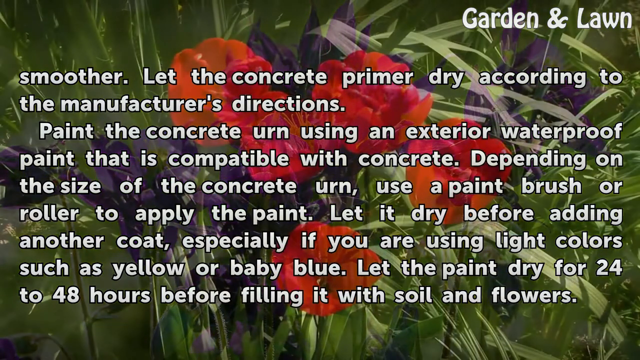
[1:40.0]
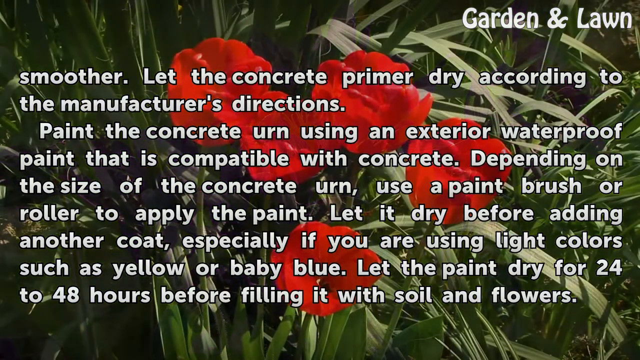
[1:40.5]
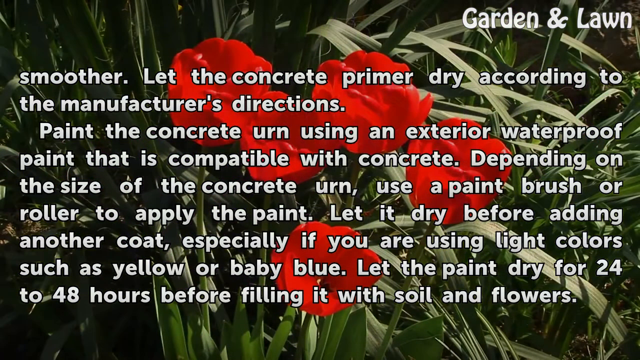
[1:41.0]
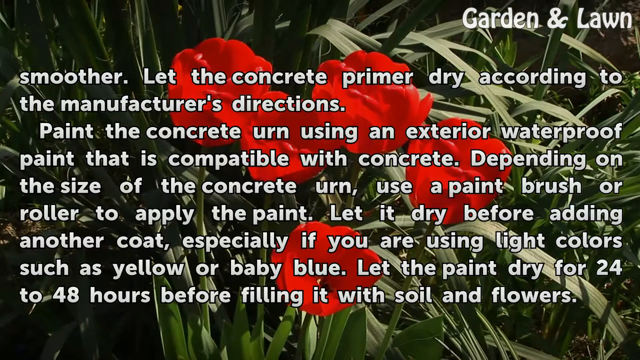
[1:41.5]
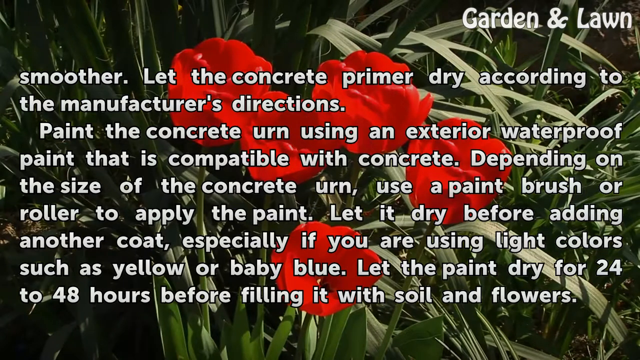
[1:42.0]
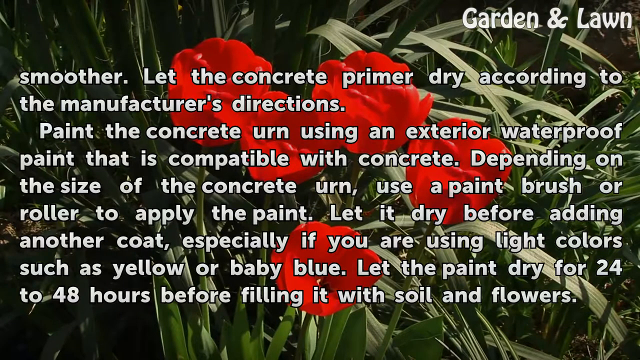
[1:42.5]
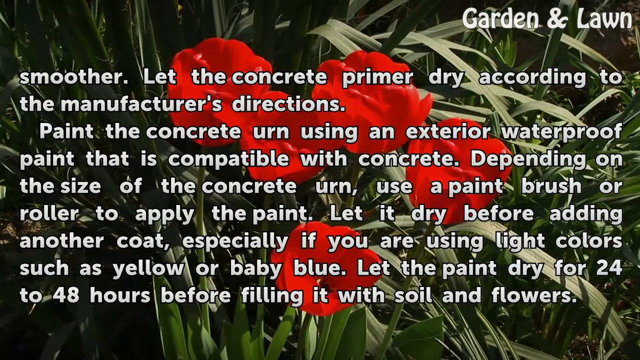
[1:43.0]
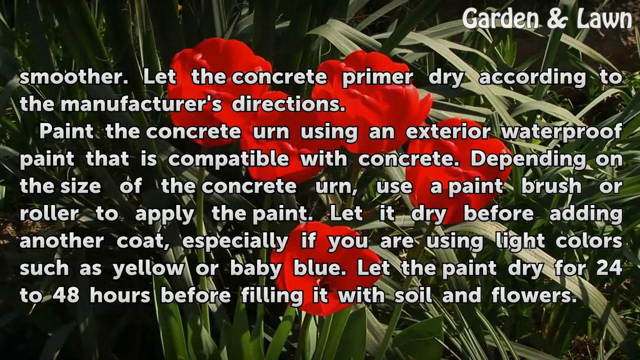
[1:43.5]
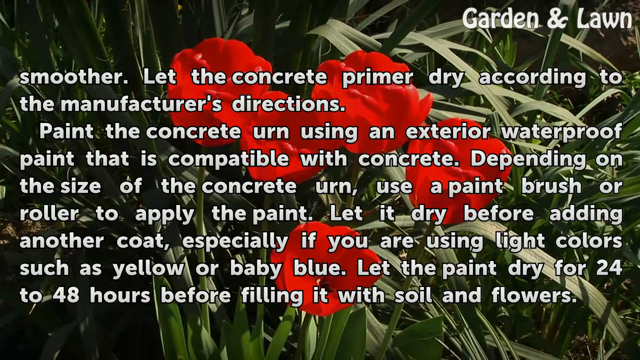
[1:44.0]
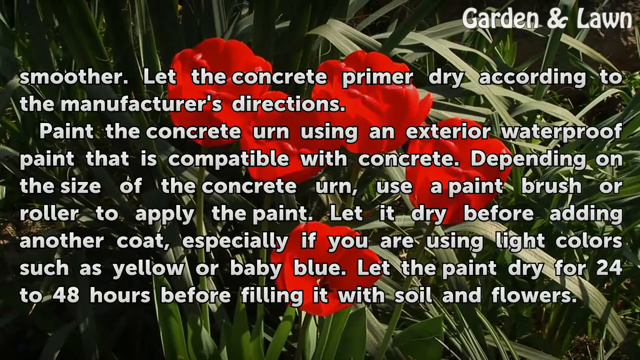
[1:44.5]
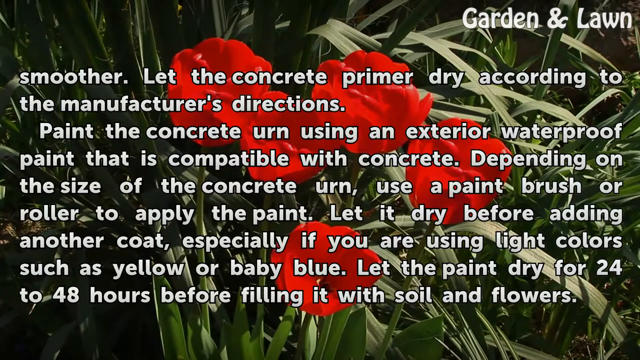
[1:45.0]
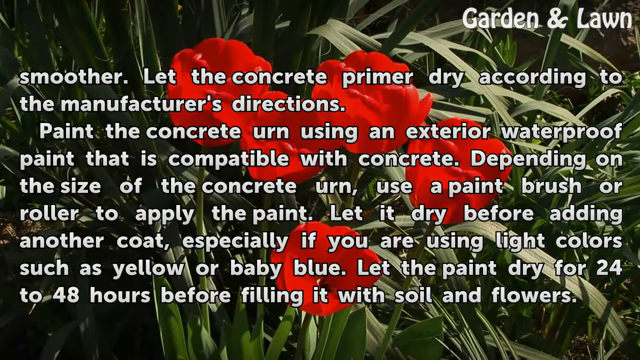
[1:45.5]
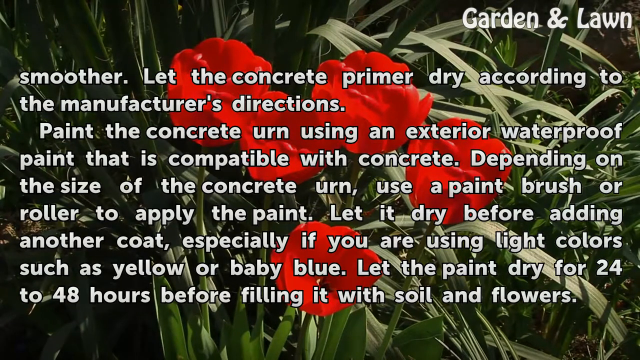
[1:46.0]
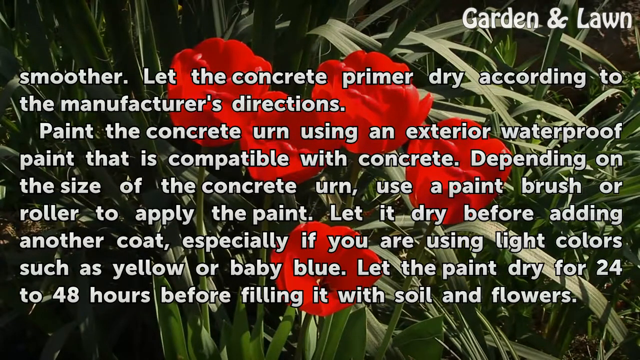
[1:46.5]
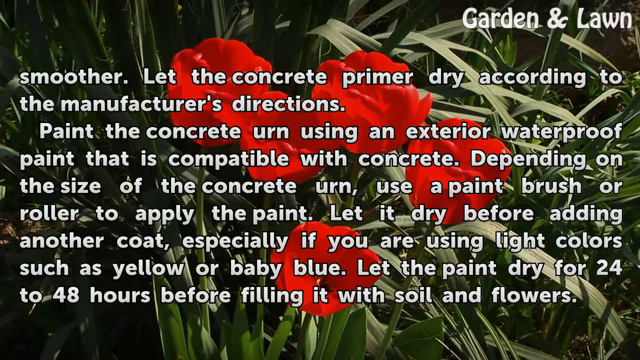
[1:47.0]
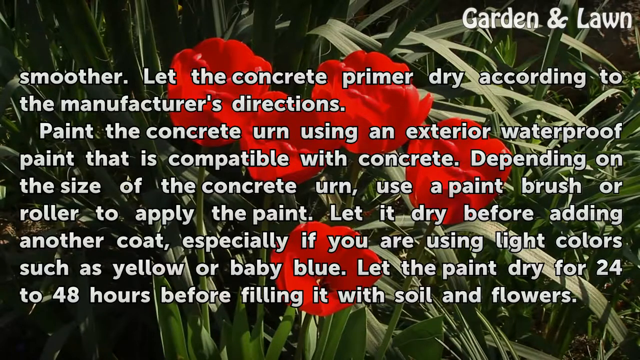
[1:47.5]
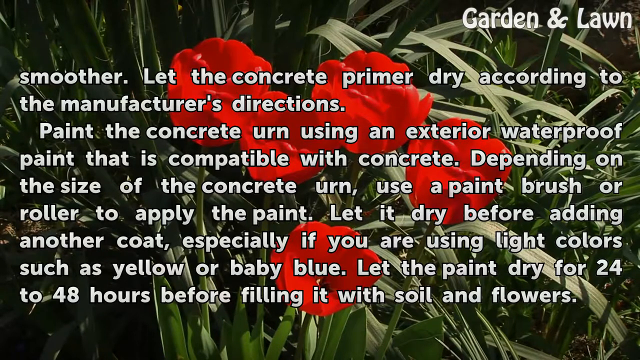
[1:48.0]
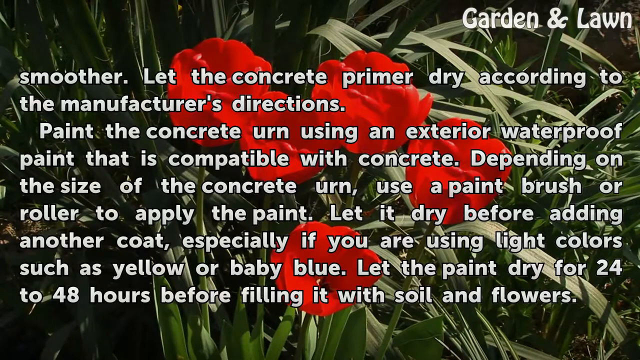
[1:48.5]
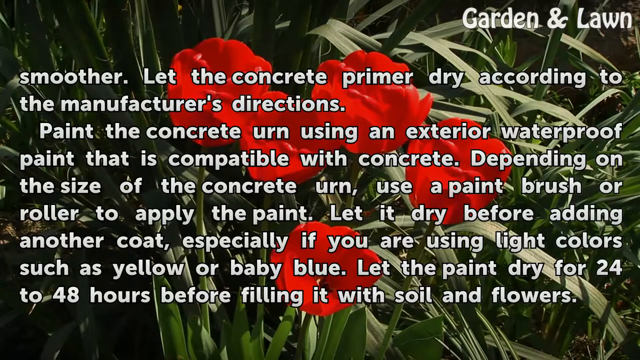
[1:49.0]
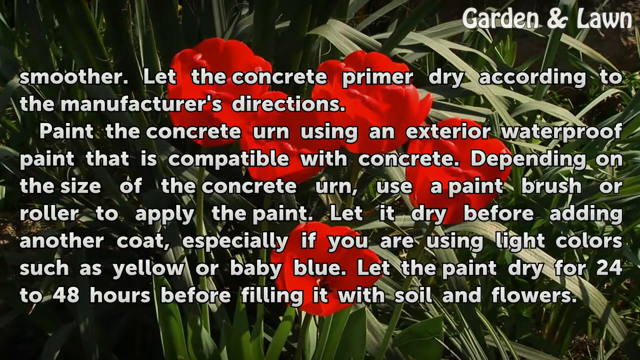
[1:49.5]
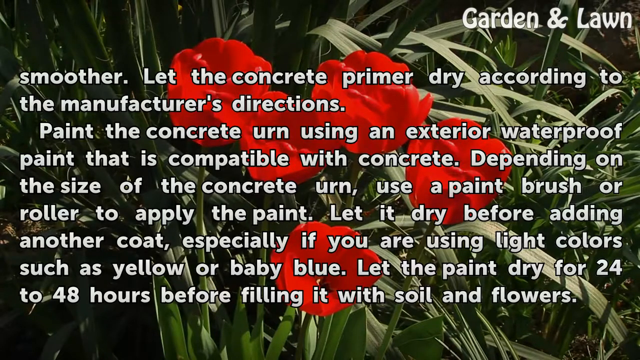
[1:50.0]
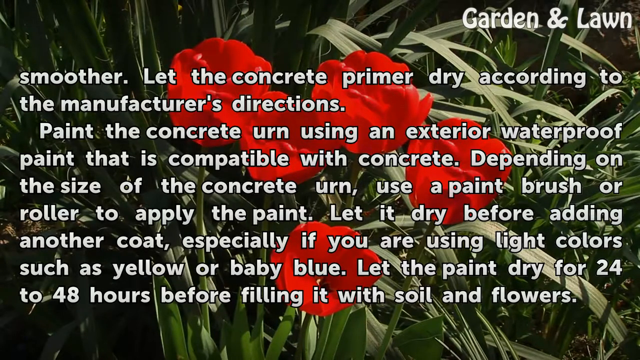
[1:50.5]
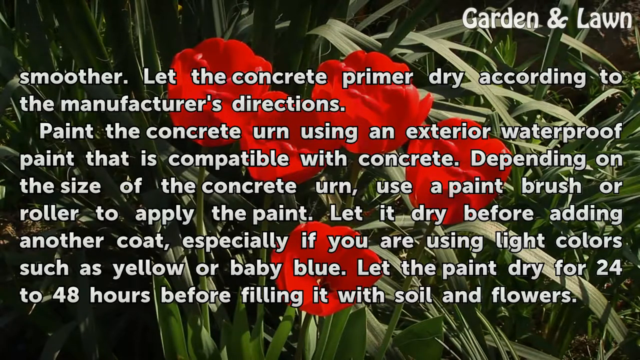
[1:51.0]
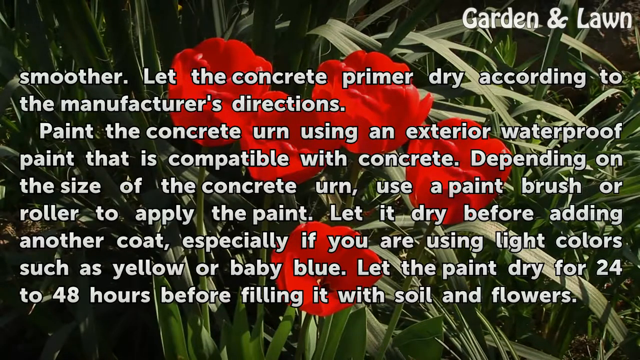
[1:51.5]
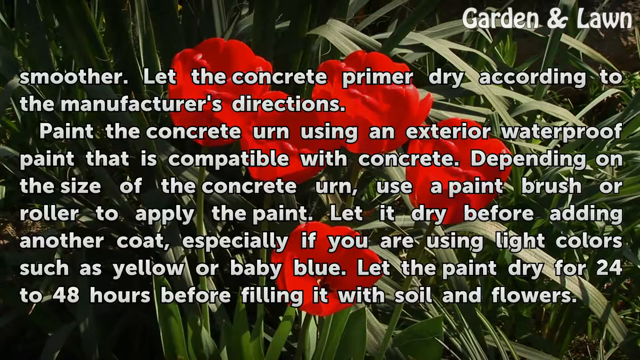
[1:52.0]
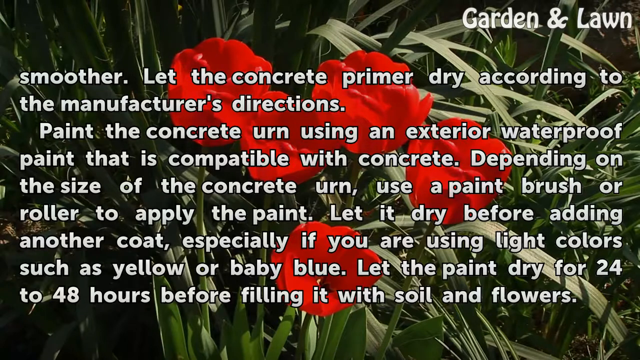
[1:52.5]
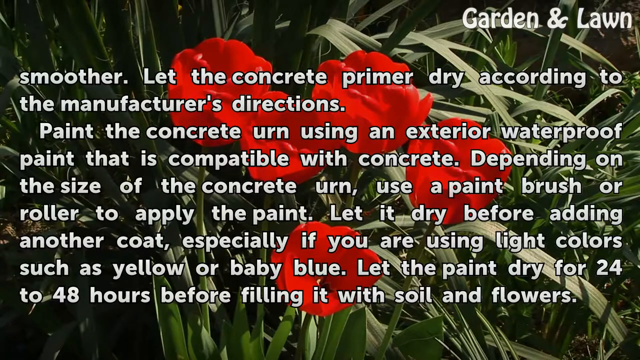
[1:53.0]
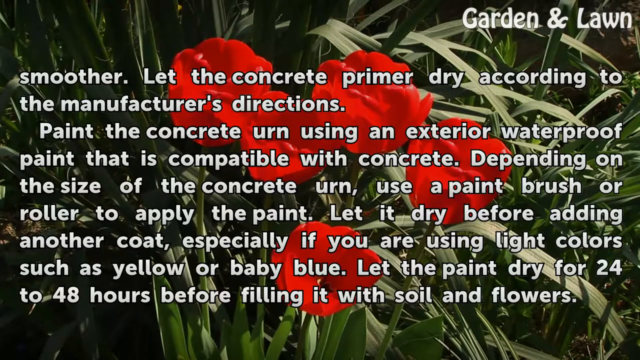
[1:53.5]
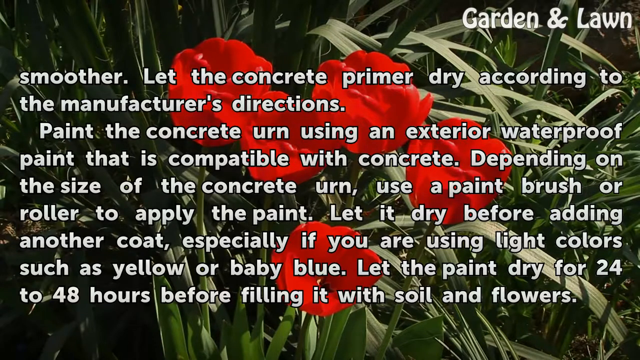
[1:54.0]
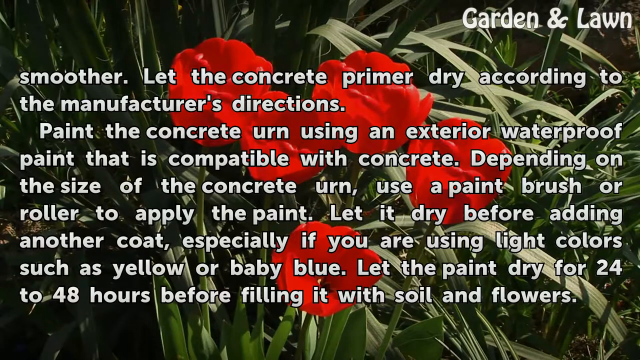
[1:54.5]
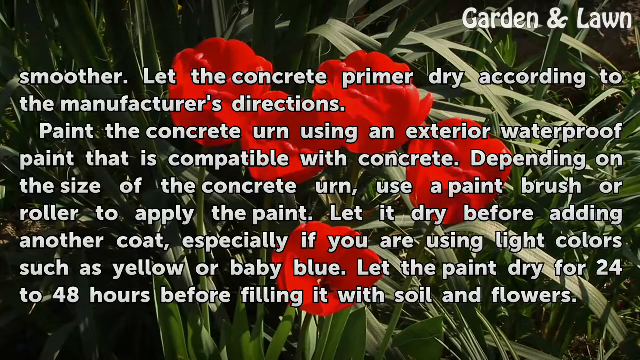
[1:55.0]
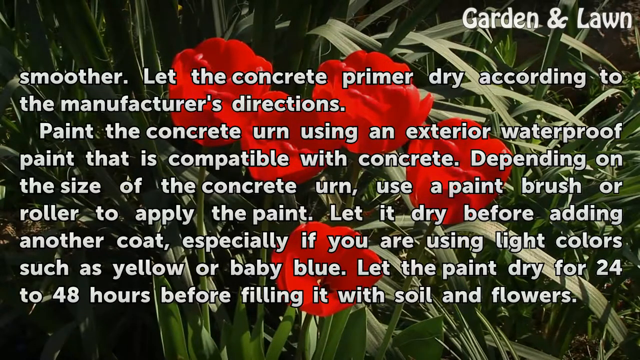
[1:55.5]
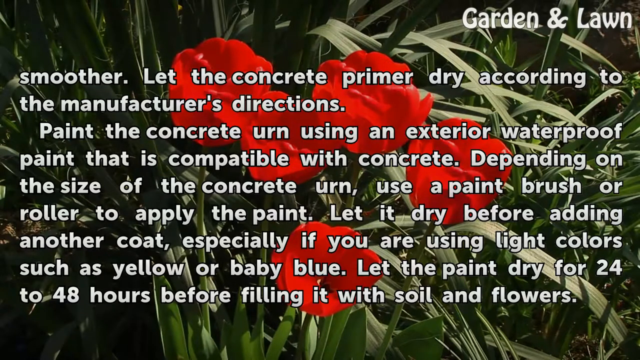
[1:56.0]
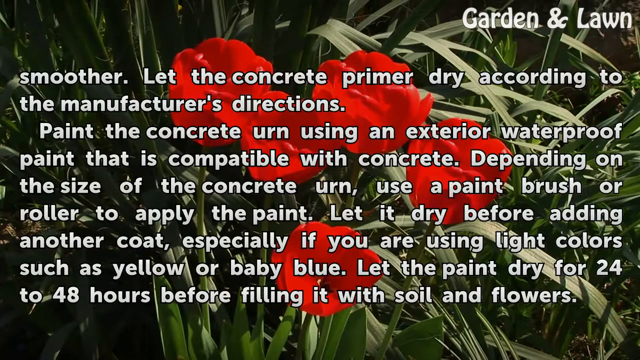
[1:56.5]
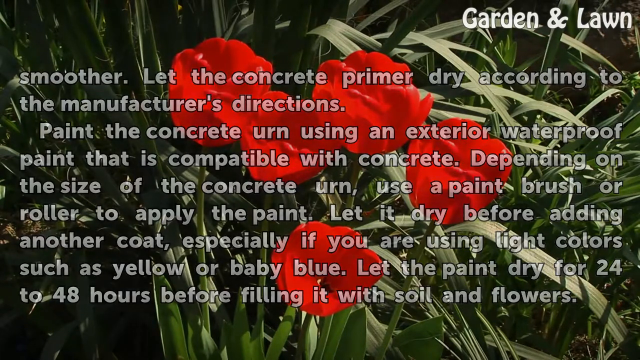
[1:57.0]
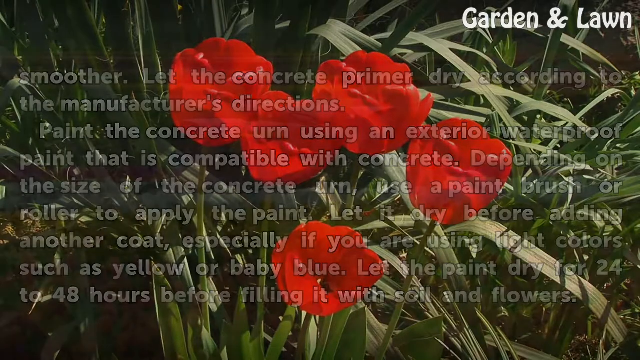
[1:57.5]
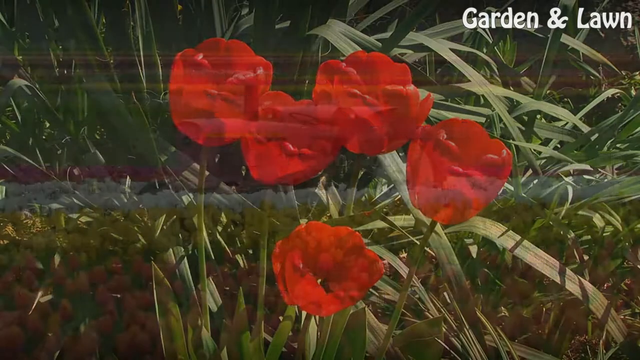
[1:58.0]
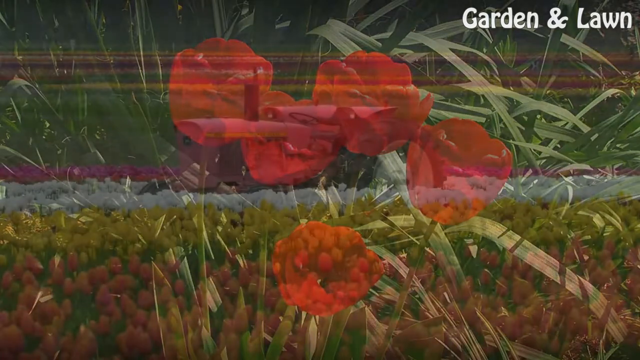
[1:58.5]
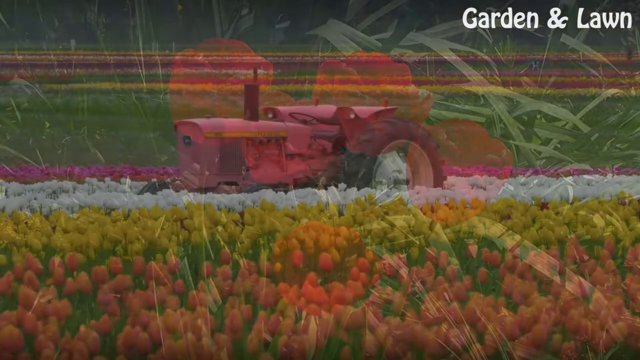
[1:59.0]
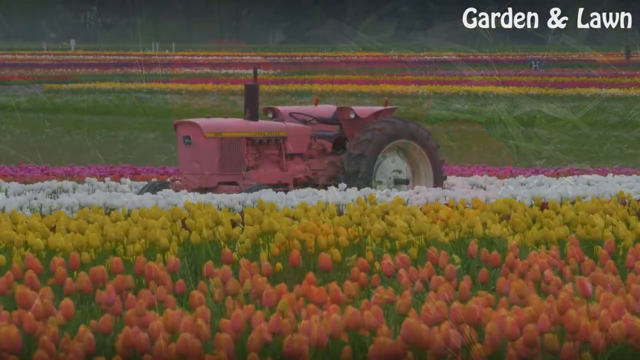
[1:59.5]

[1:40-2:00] The background shows what appear to be red tulips, and the text on screen looks similar to the previous text. Not much happens while the text stays up. The text then slowly fades out and more tips on making the urn for the garden appear, still over the background of red tulips.